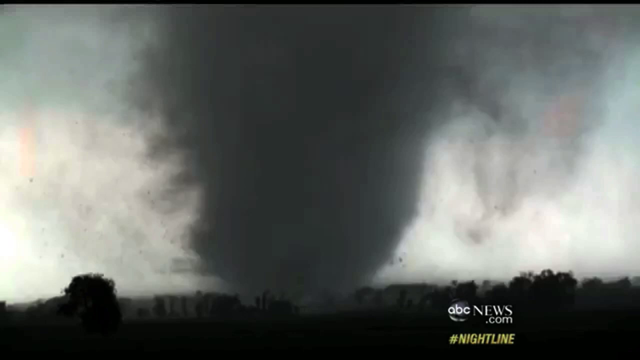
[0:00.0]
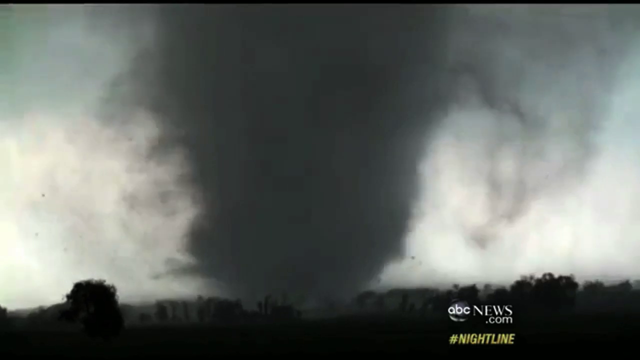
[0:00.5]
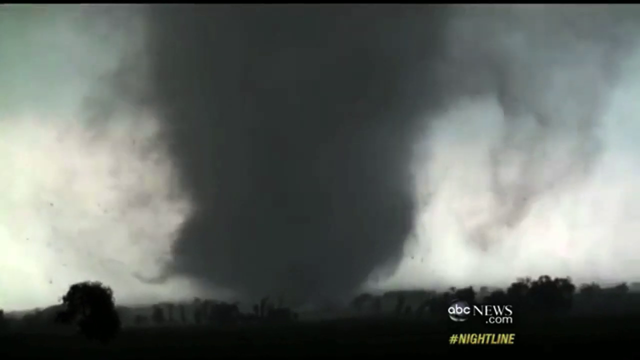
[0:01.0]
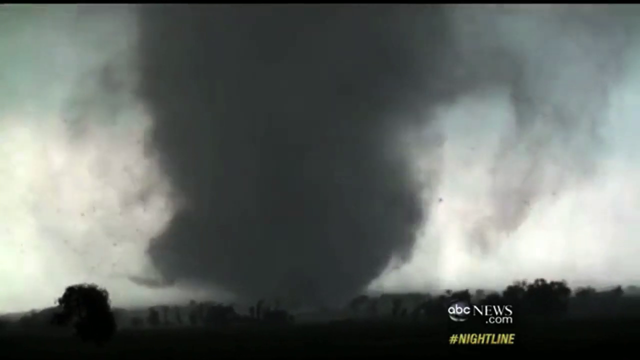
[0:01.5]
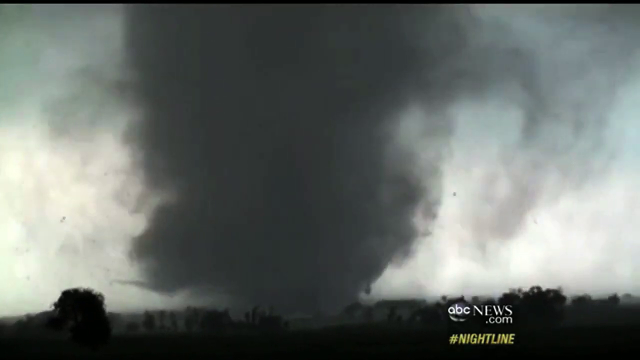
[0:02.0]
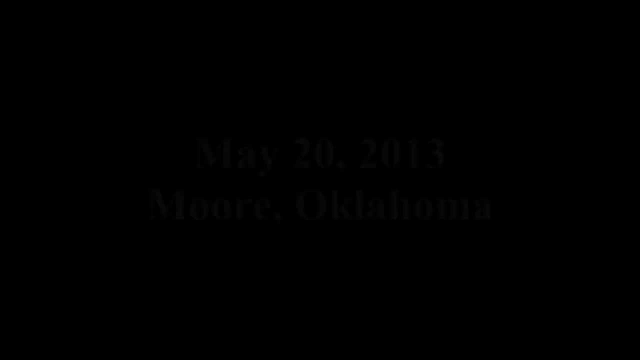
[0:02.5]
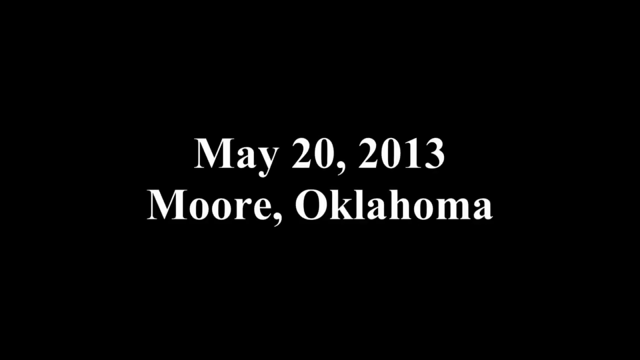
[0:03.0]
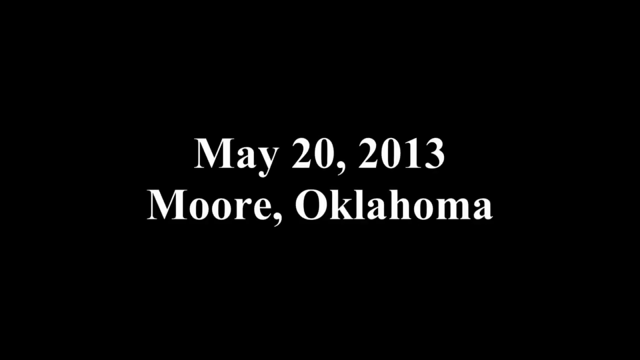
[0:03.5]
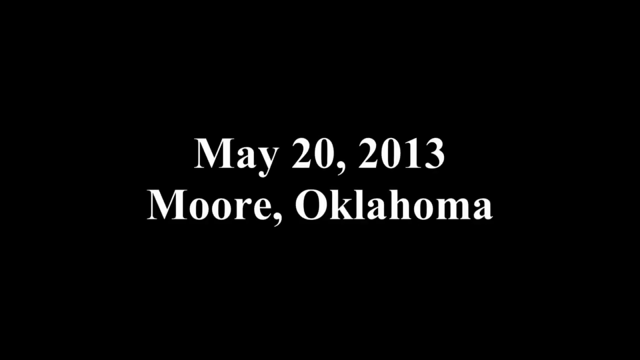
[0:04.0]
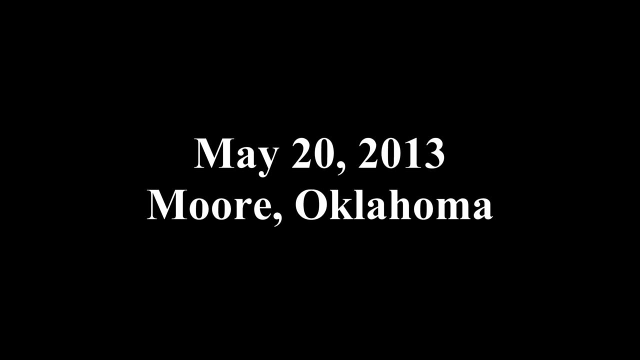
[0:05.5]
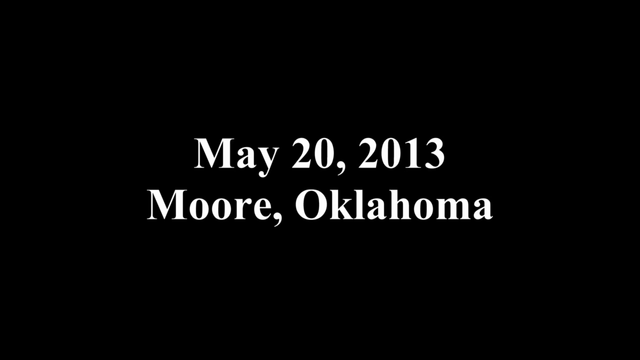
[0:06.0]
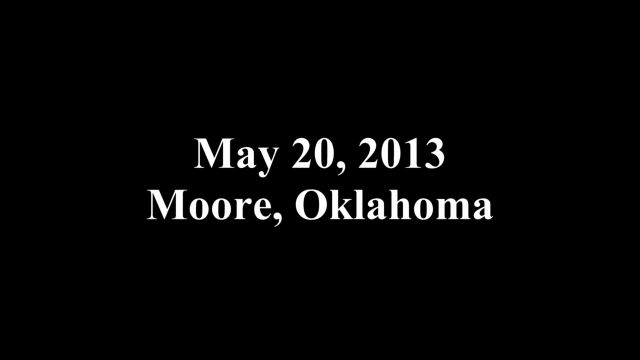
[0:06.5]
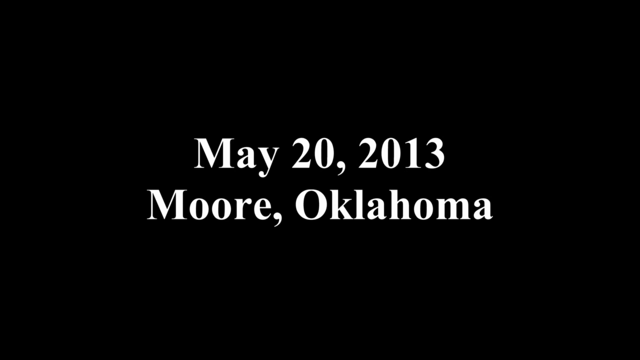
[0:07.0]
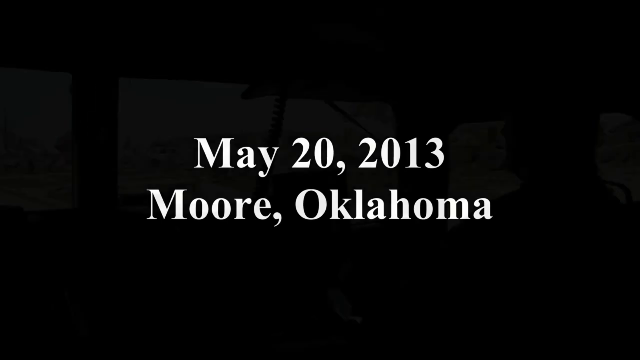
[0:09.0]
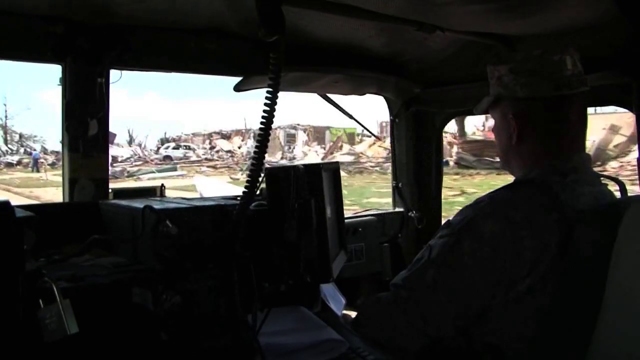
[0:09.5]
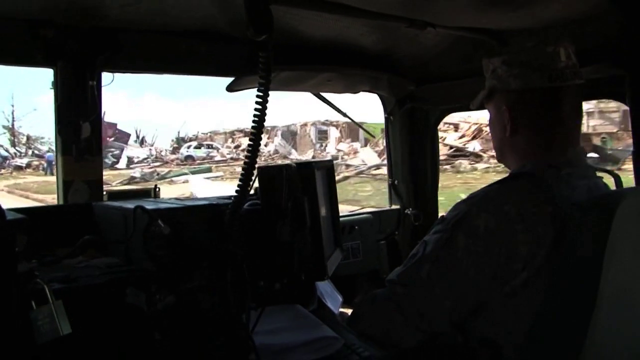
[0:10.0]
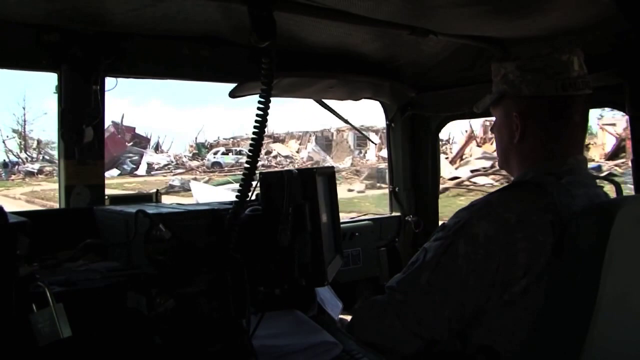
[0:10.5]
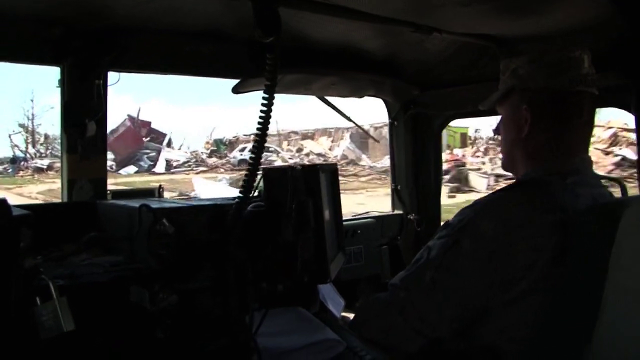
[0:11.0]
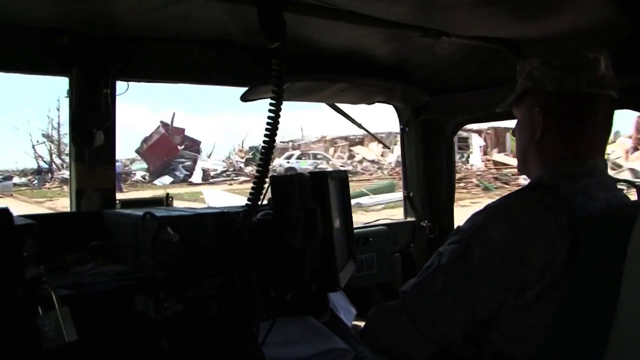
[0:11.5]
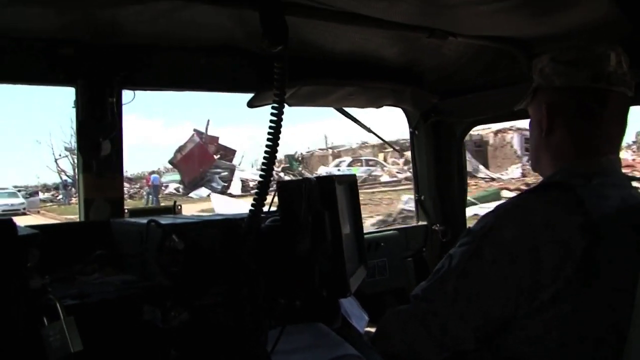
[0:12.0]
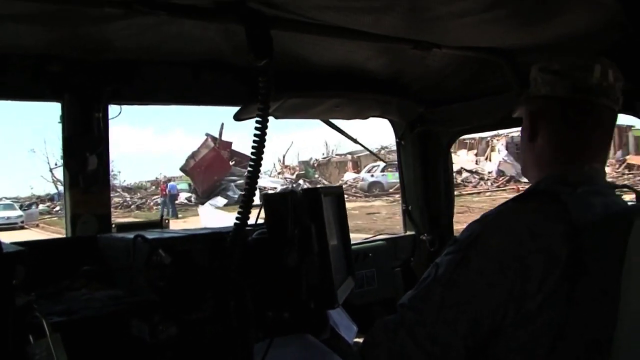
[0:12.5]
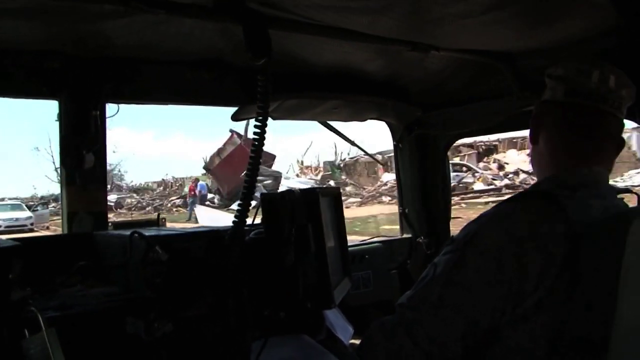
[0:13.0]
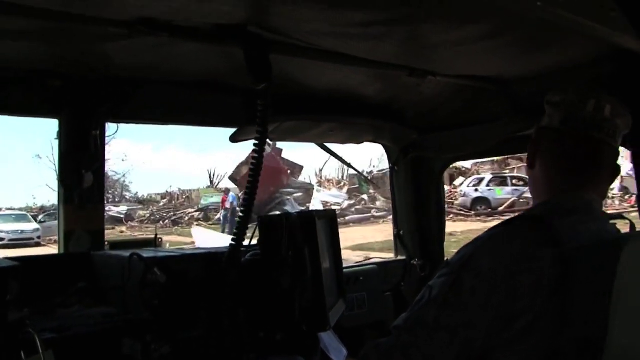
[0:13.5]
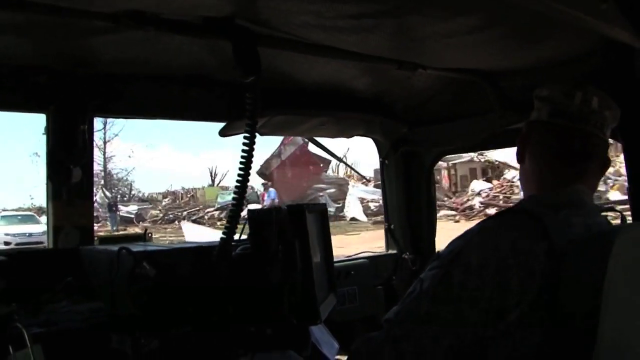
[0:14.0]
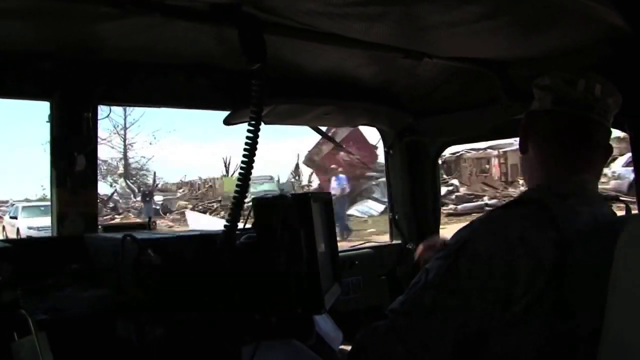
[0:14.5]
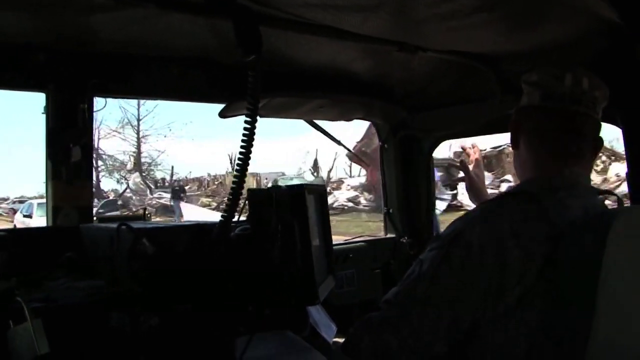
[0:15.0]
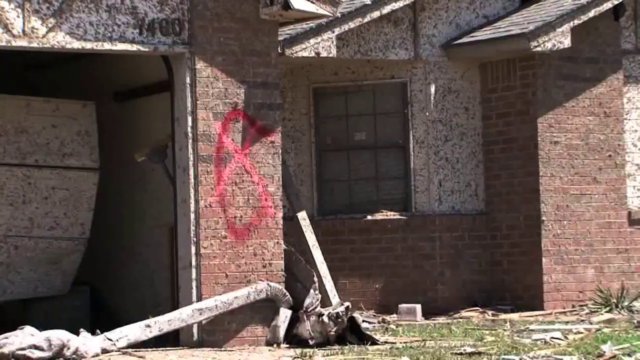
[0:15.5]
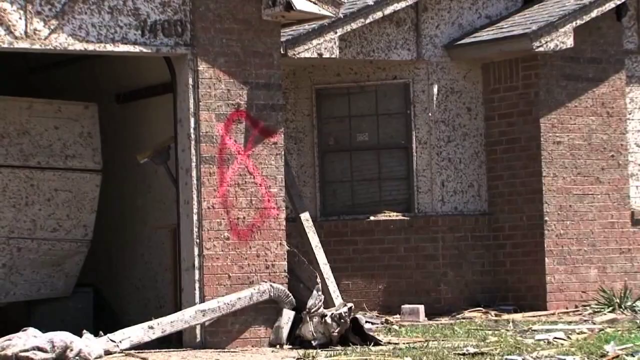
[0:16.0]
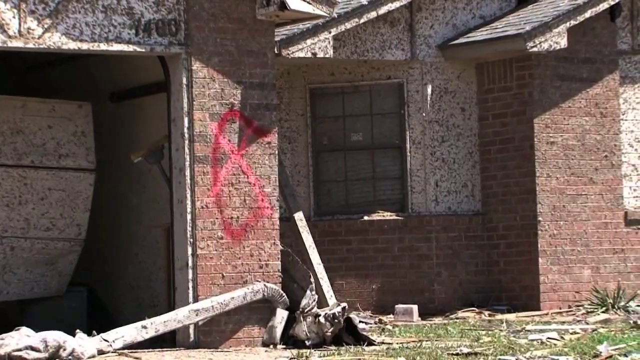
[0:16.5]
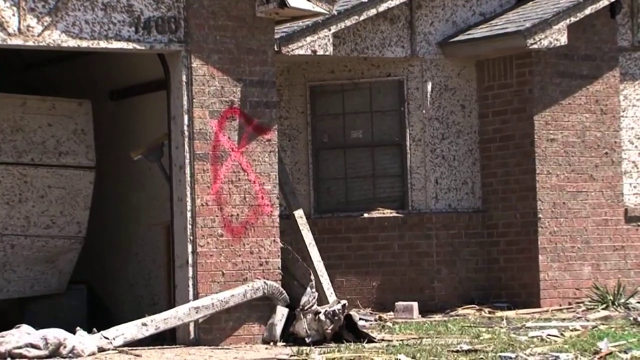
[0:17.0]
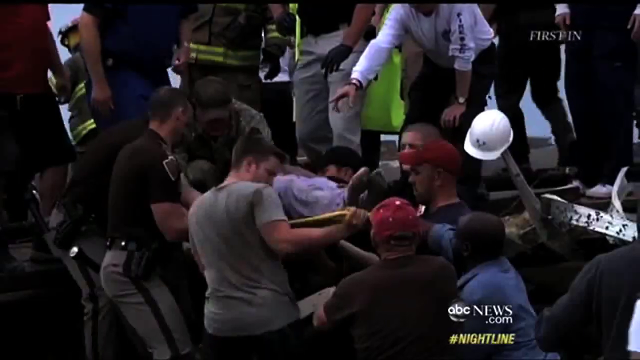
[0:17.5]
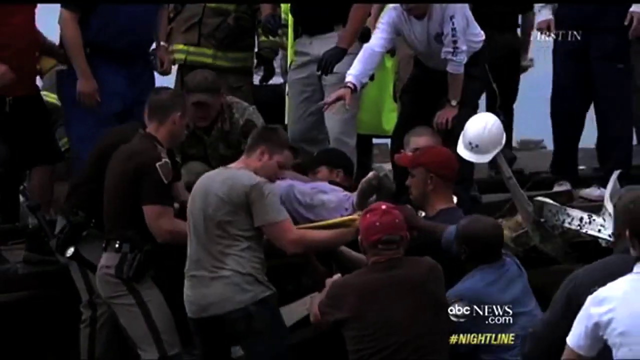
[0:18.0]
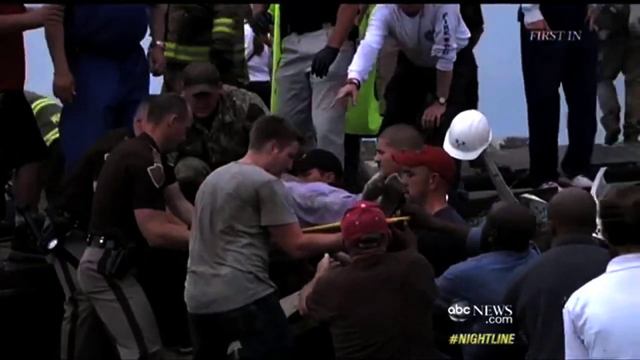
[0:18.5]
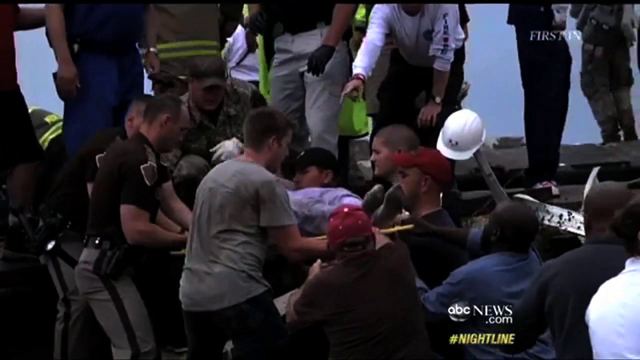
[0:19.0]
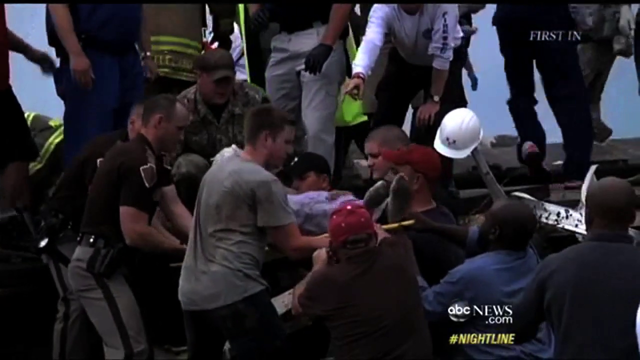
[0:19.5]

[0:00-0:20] The video opens on a trail of leaves under a dark sky. A tornado appears with dark grey clouds against a white sky in the background, and the shapes of trees are visible as black shadows. A black screen follows with bold white text reading "May 20, 2013, Moore, Oklahoma". Next, a driver who looks like he is driving a military truck appears, wearing a military cap and military uniform; through the glass of the windscreen, damaged properties, damaged cars and damaged homes are visible as they drive by. Individuals walk on the streets, and multiple people are assisting a person on a stretcher who looks like they have passed away. The footage is marked as reported on abcnews.com #nightline.